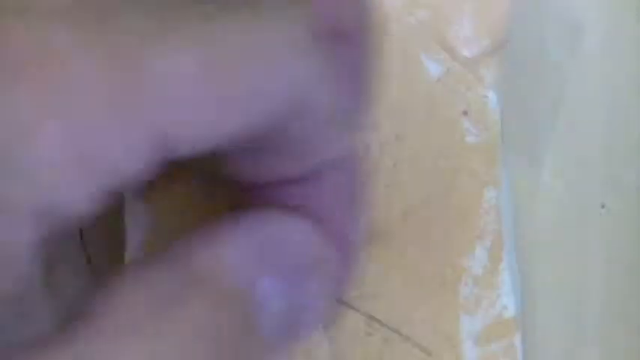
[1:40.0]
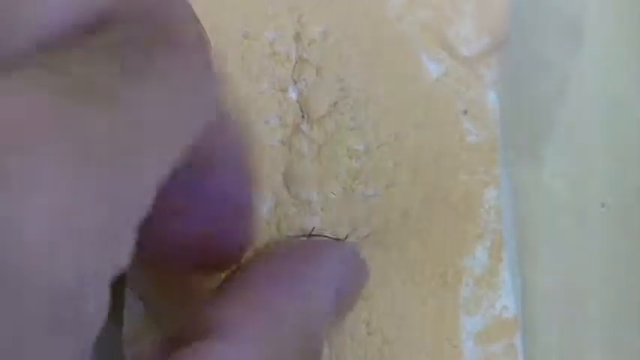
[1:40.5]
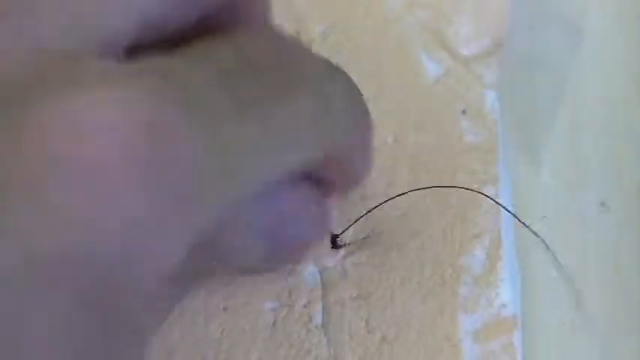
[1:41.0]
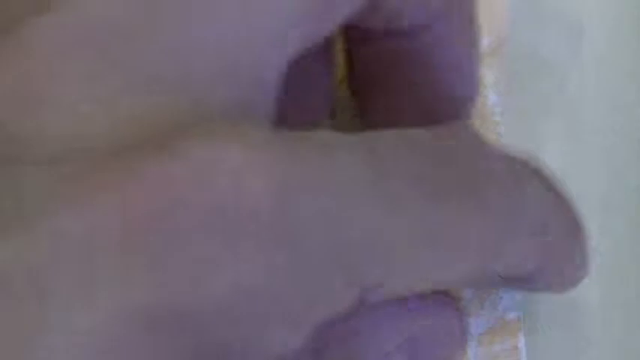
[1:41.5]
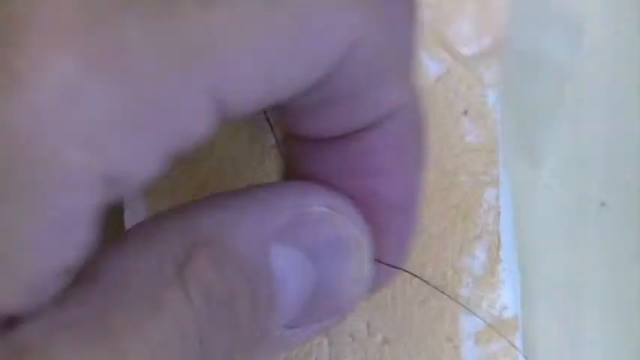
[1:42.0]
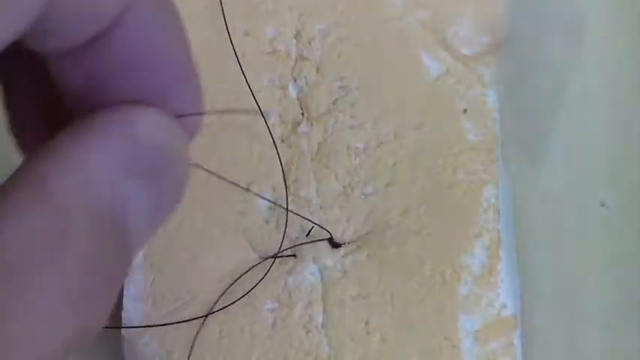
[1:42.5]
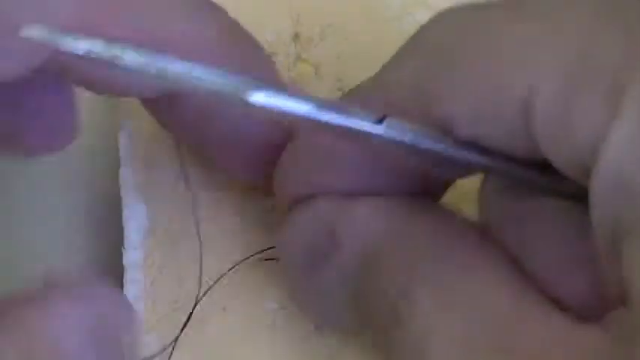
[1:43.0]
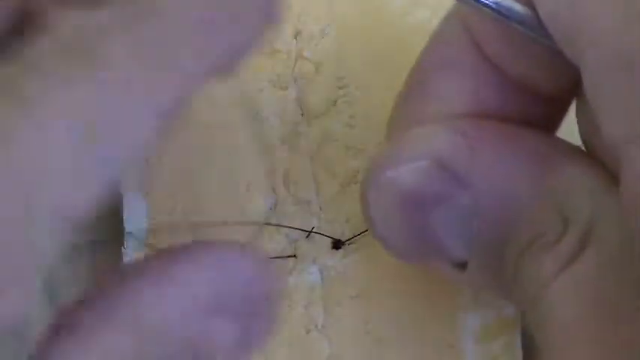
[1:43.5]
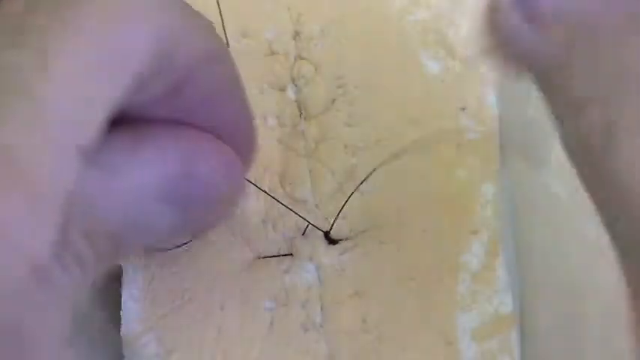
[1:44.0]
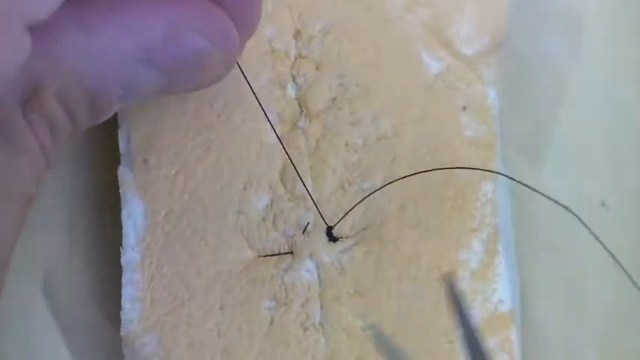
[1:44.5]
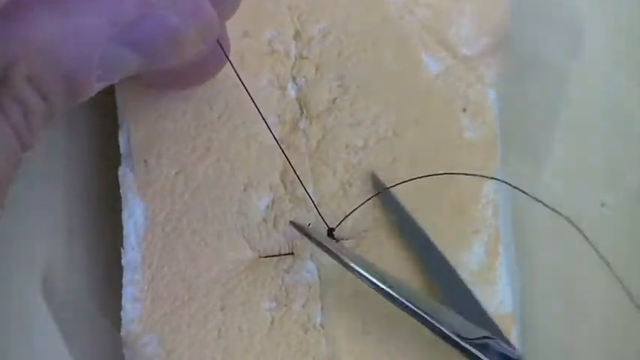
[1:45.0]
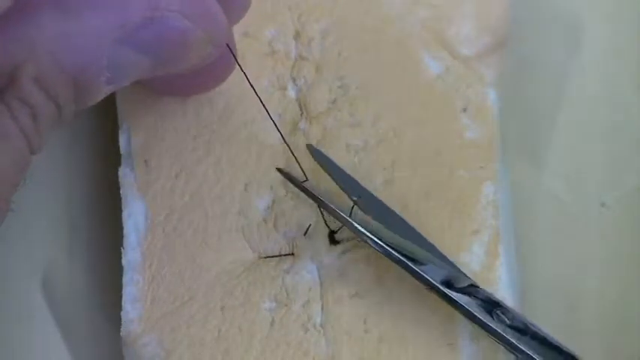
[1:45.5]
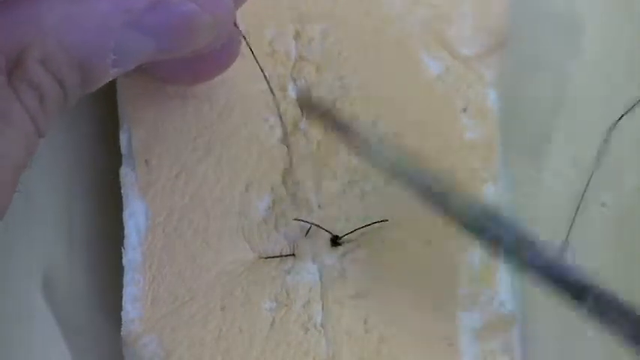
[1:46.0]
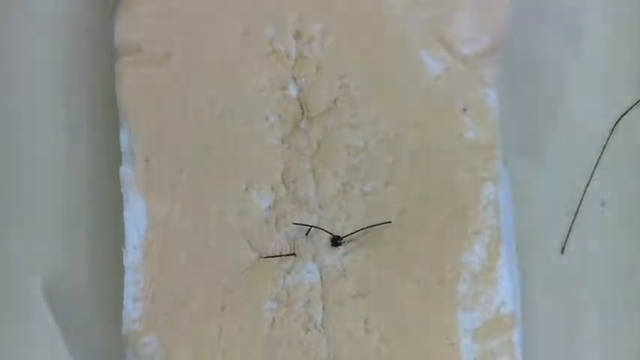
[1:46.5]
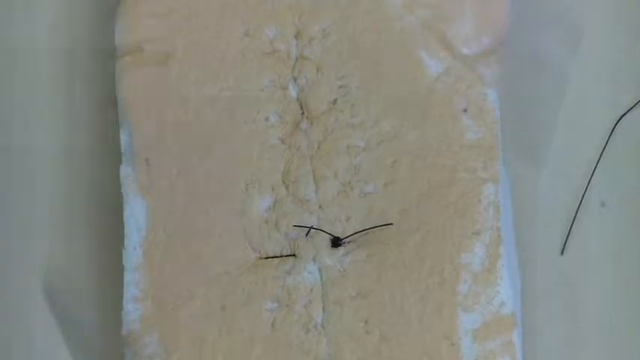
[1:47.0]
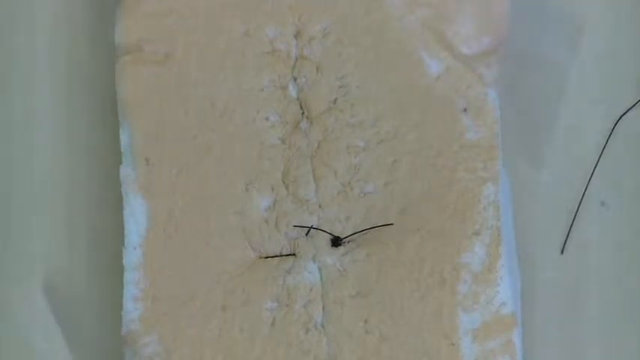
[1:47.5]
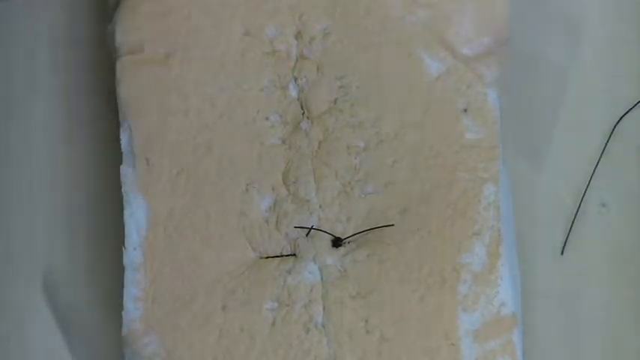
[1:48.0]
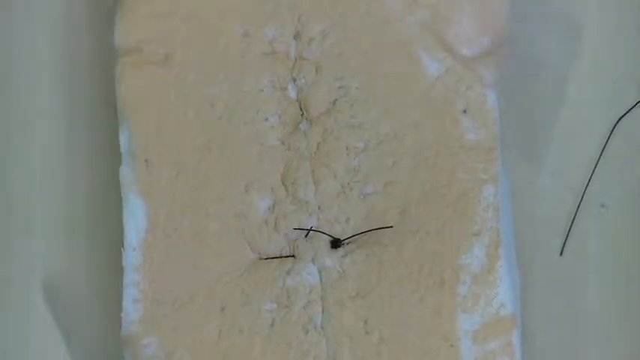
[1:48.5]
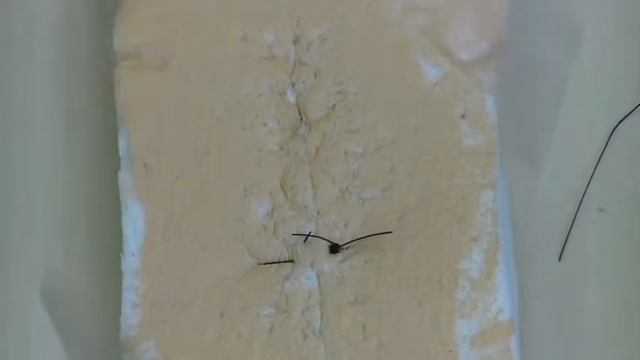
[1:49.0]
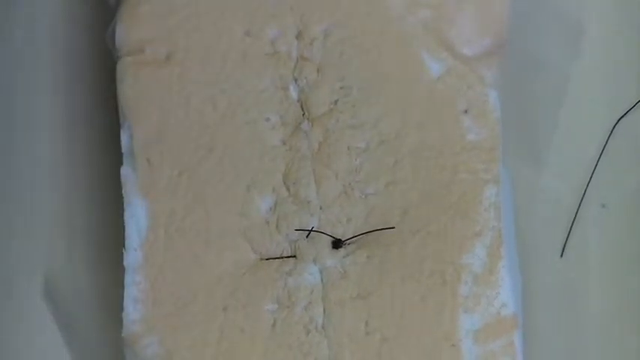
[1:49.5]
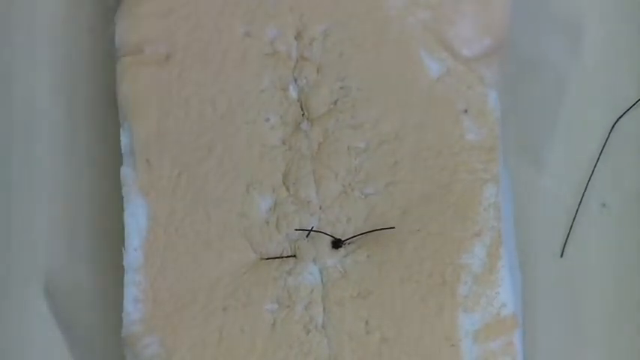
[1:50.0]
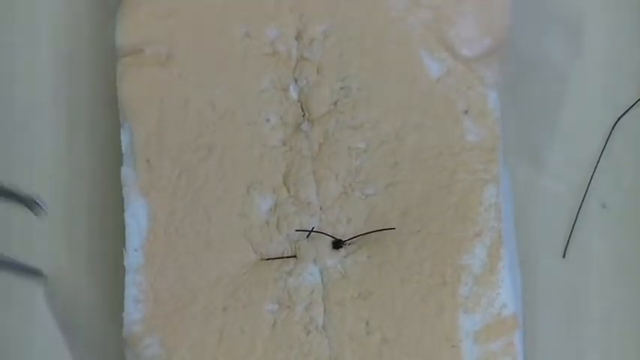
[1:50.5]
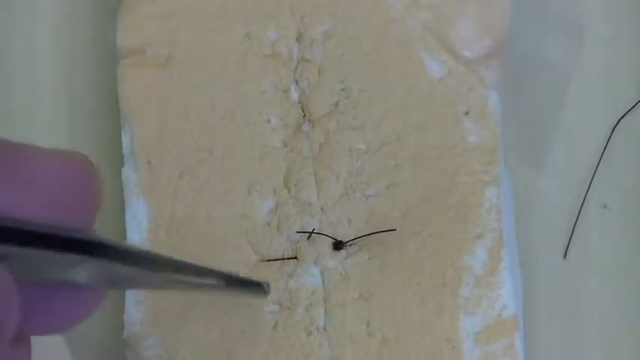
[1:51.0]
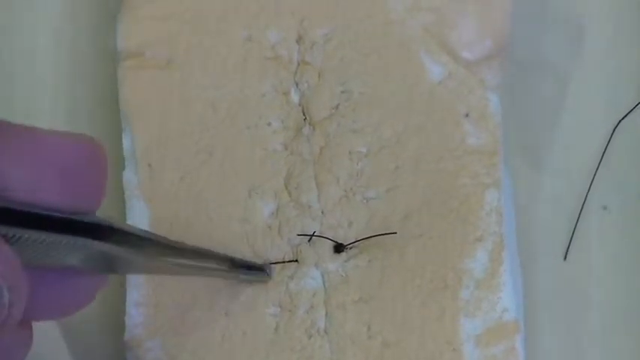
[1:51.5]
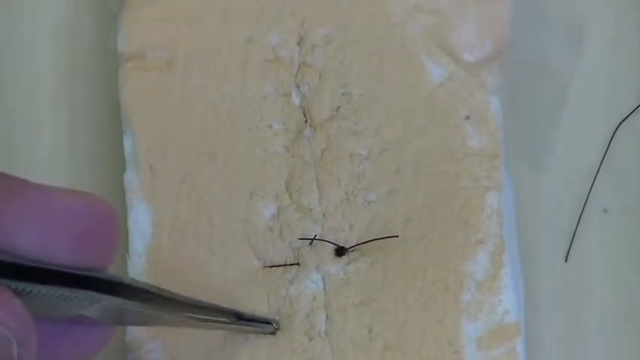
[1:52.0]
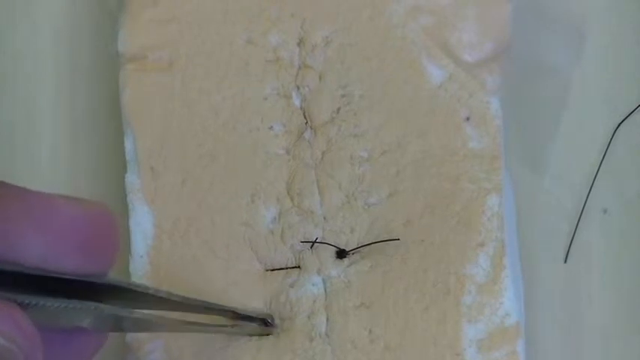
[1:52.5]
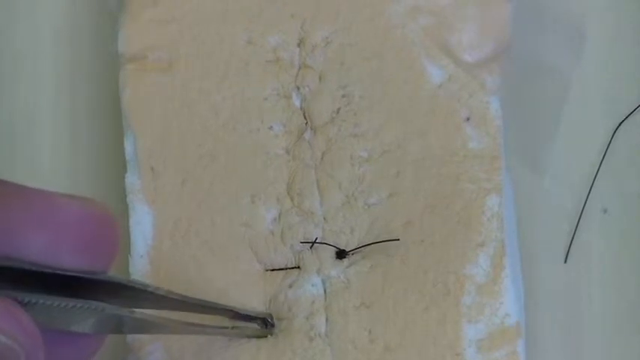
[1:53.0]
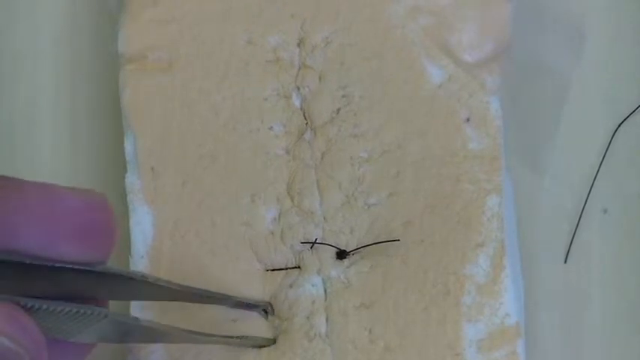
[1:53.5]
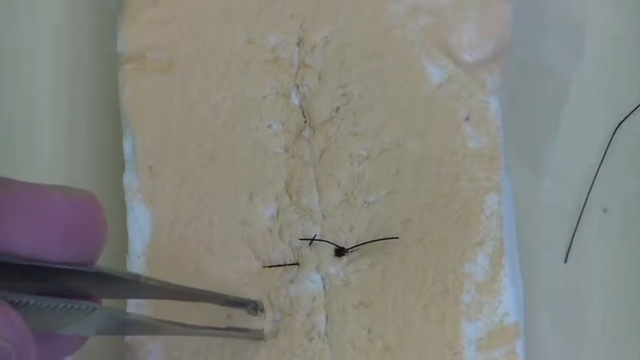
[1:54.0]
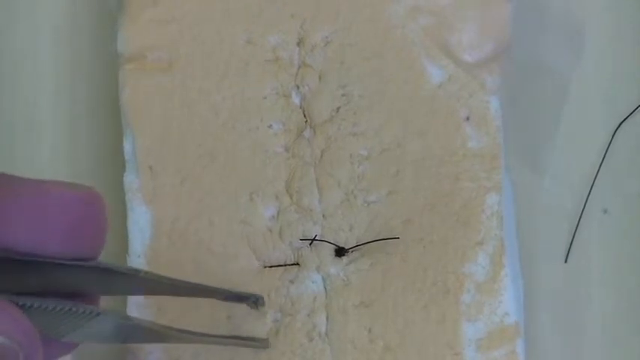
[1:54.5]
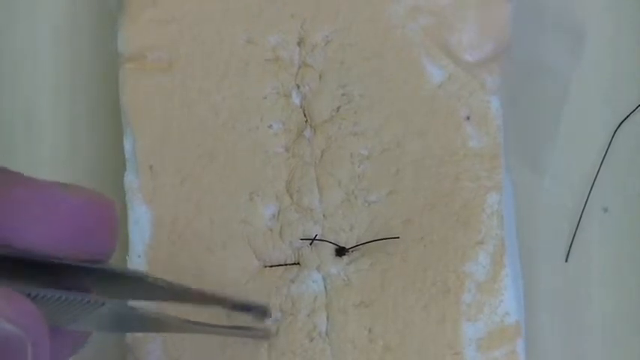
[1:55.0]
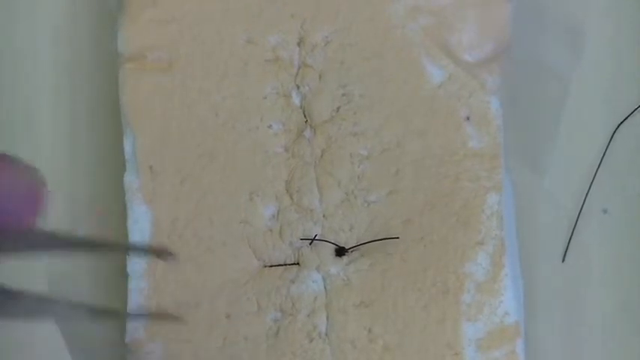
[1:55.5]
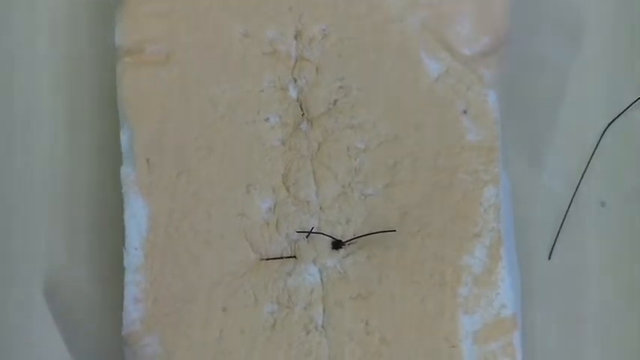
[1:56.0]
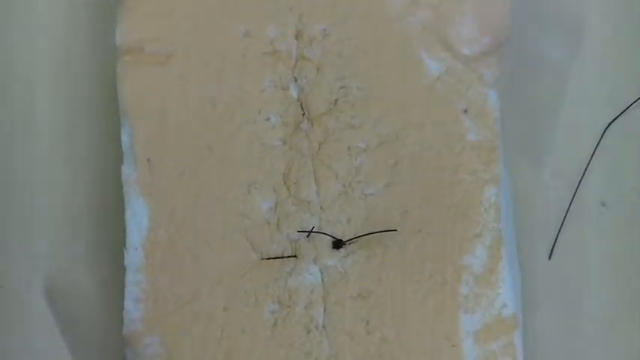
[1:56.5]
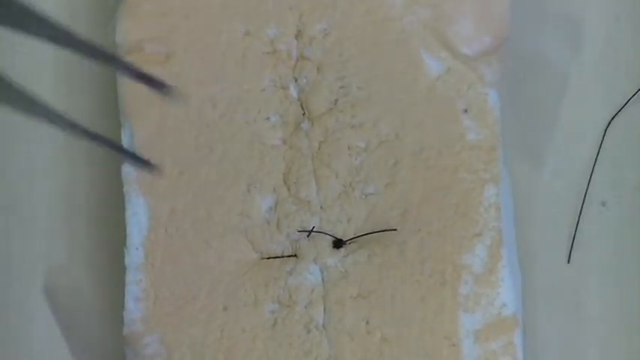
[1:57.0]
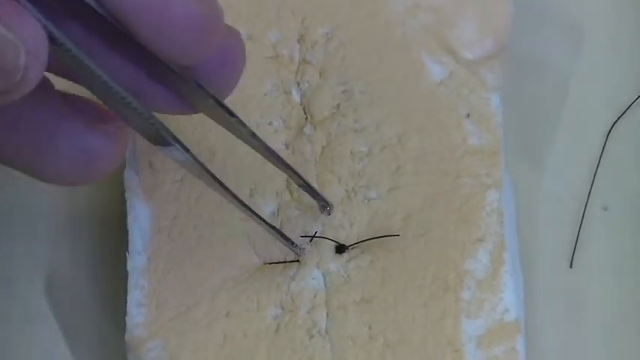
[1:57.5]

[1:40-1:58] The man finishes the stitch and cuts off the remaining thread using the sharp edge of the forceps. The camera stays stationed in a very close-up shot on his hands, showing what he is doing between his hands and the object he is stitching.